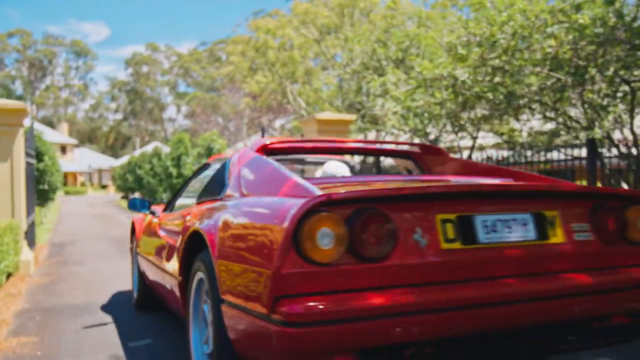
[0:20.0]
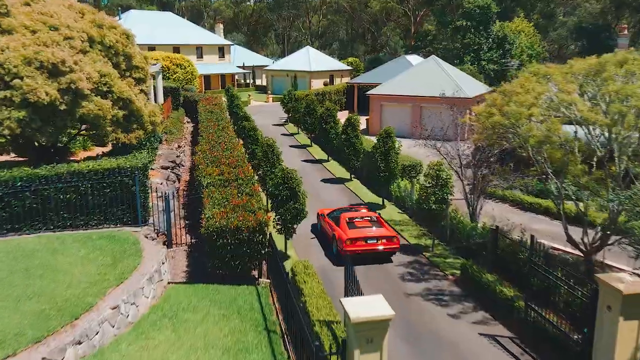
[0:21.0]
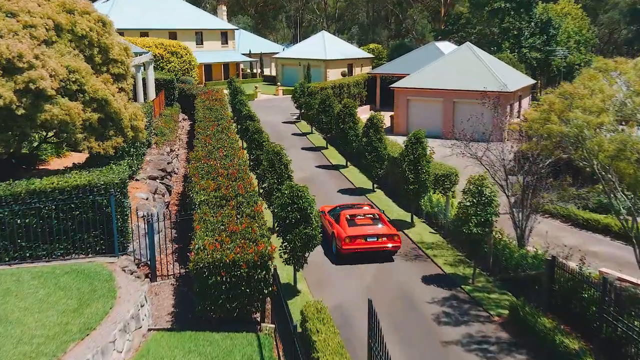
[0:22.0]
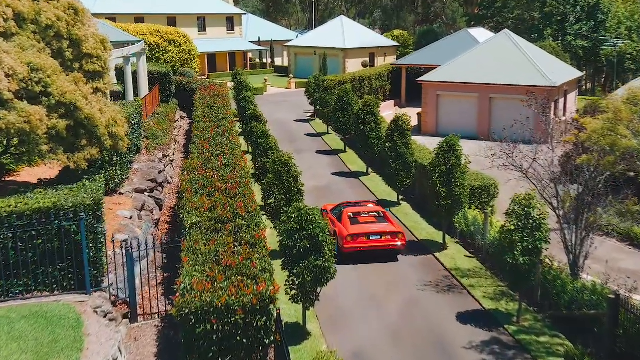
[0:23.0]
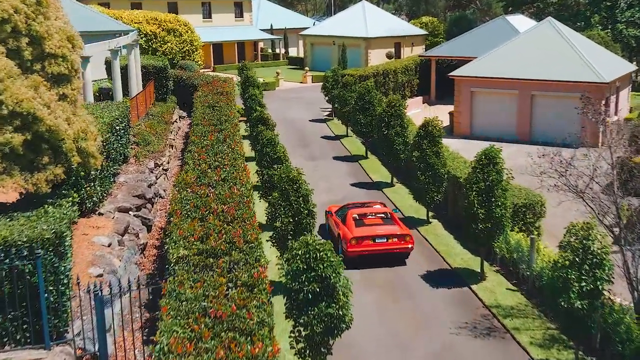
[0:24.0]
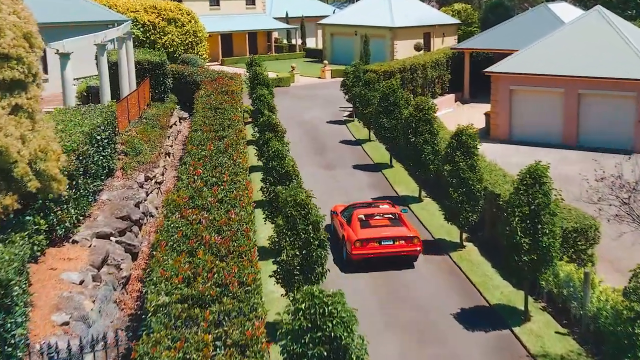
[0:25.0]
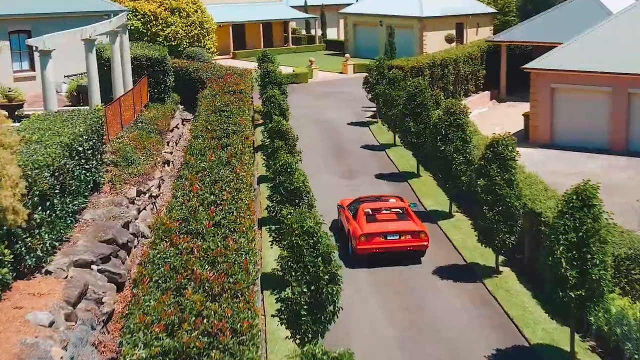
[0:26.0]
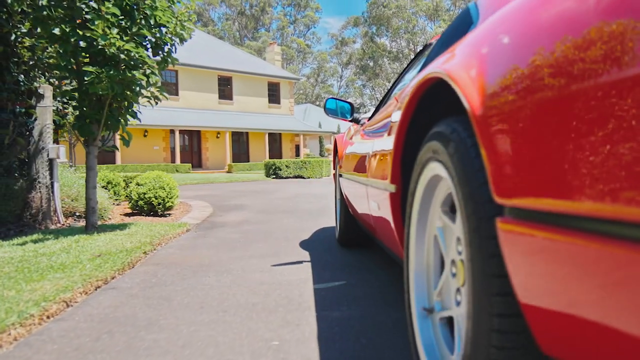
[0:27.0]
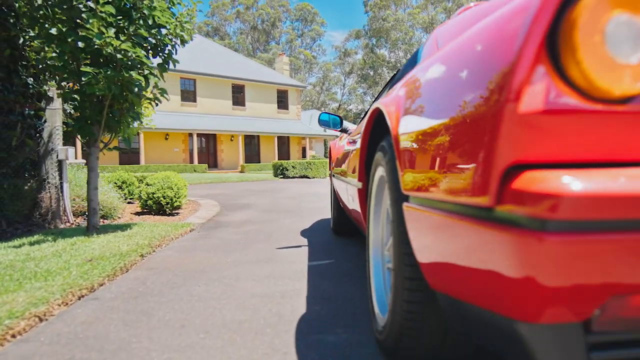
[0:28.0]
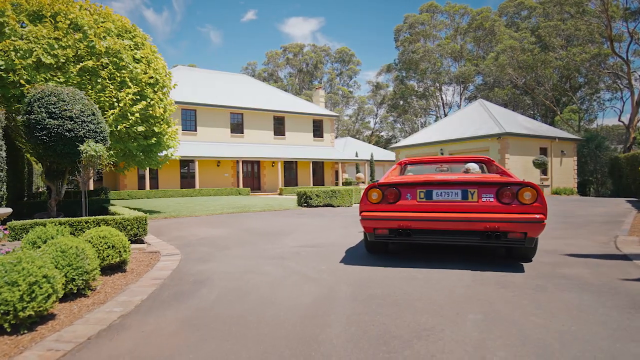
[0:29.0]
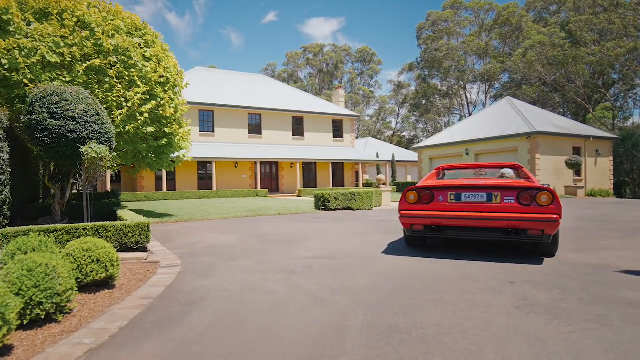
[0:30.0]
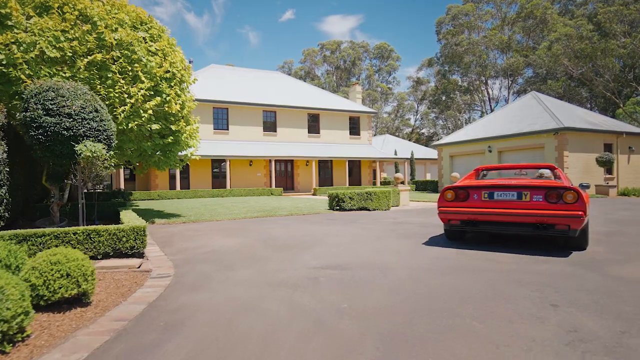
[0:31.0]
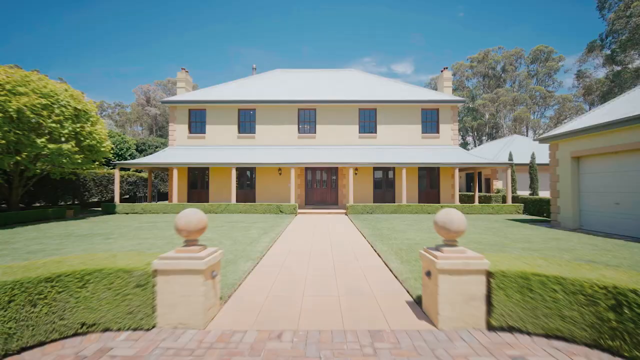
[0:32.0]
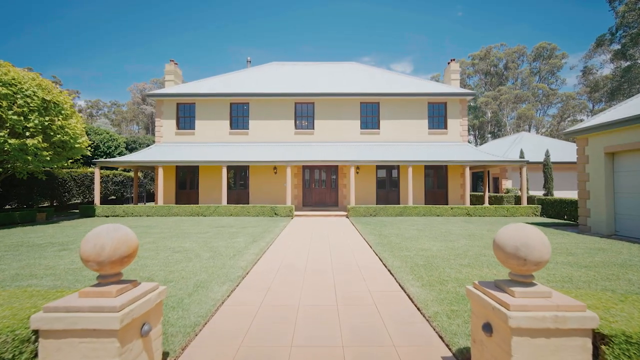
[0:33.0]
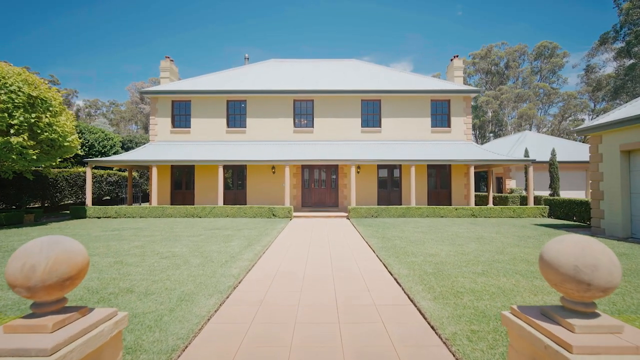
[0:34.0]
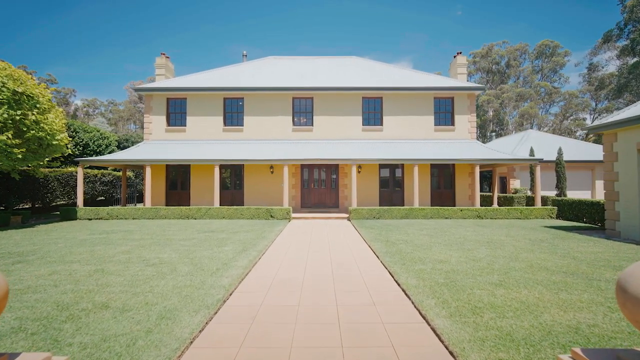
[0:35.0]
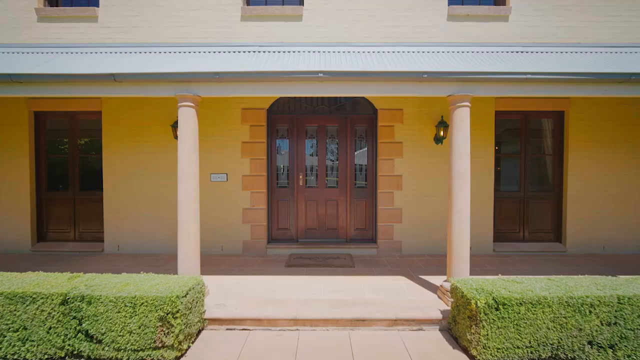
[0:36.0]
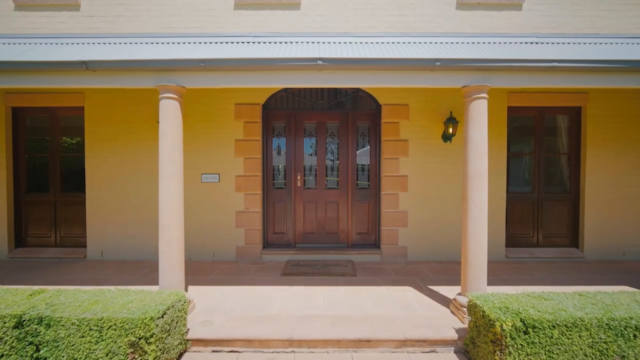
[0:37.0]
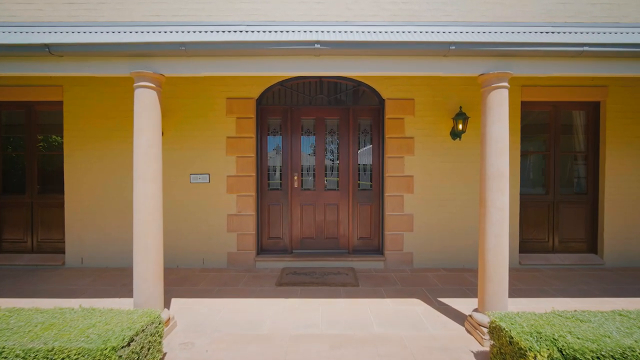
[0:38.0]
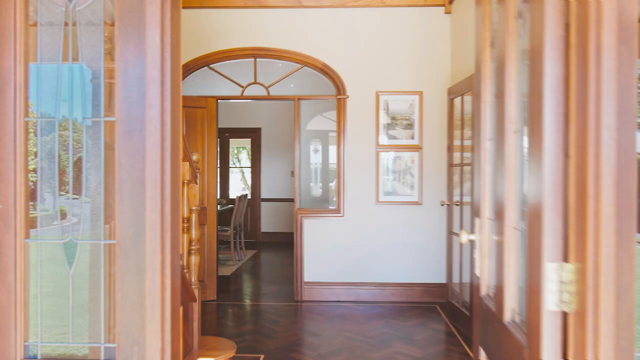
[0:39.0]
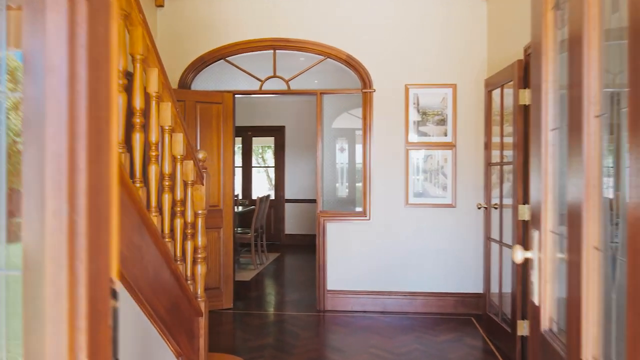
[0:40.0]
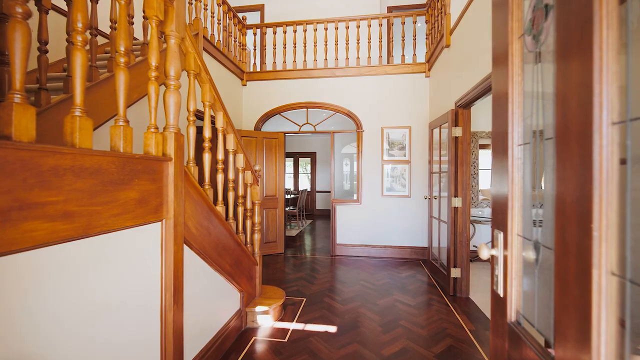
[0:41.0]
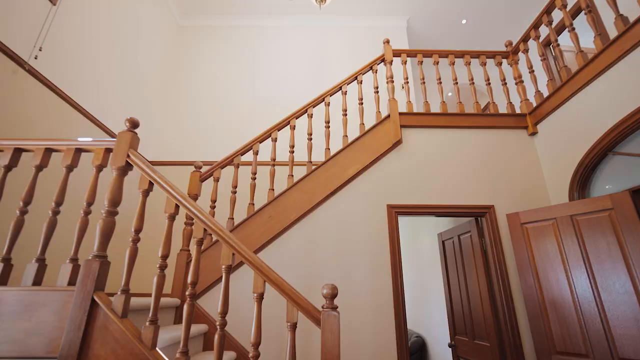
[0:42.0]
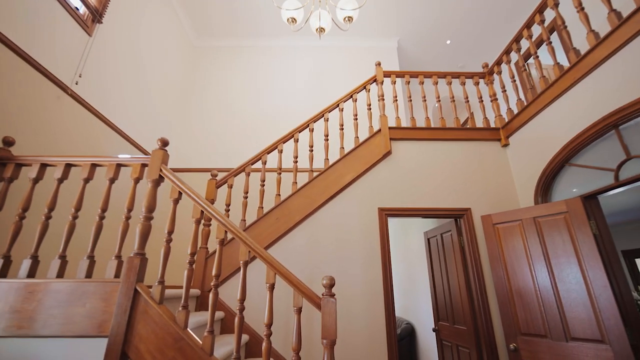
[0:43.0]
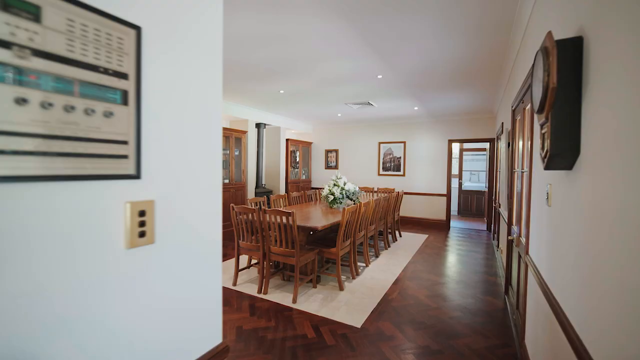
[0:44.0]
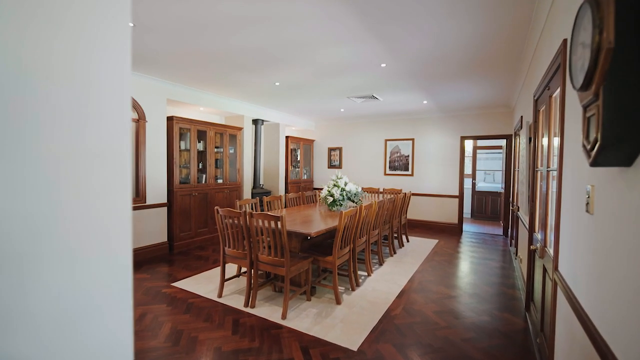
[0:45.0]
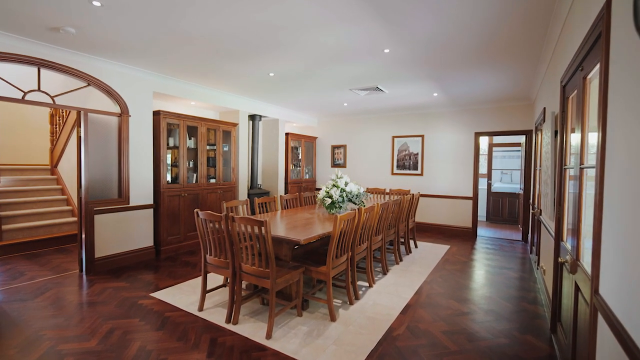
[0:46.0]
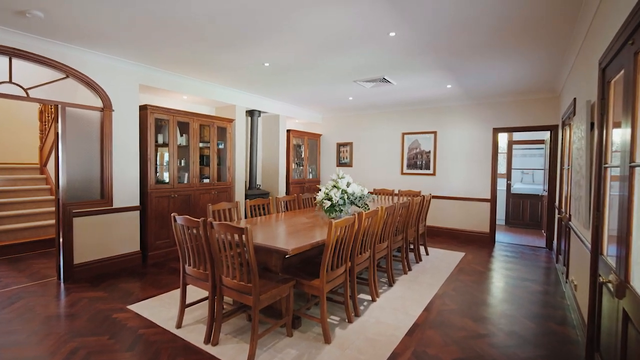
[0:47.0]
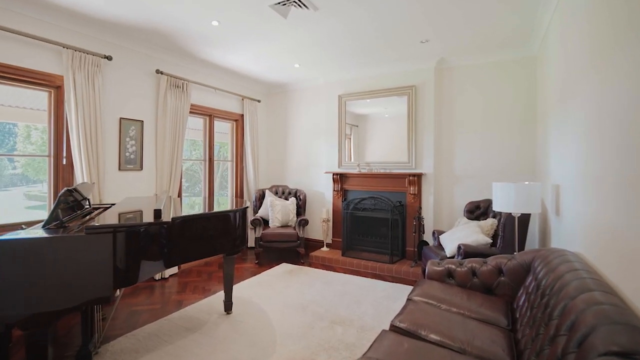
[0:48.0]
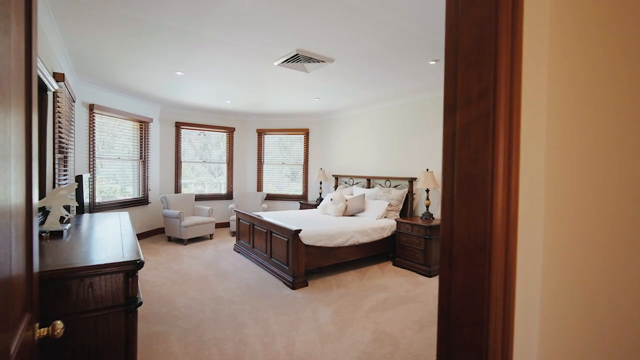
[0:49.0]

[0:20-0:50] The red Porsche pulls into a driveway in front of a home, apparently its owner's. The front of the home has a European look: cobblestones are used, the entryway has European-style artifacts, and the path to the front door has a tile print that looks almost cemented. The grass is artificial, while the bushes might be real; they are shaped into squares in an artistic way. The door and the front windows have wooden paneling. Inside, the entryway and most of the materials are wood, including the furniture, the fireplace, the bed frames and the window trim. The front of the home is a yellow cream color, and the interior is a little lighter, a white cream color that matches the exterior.